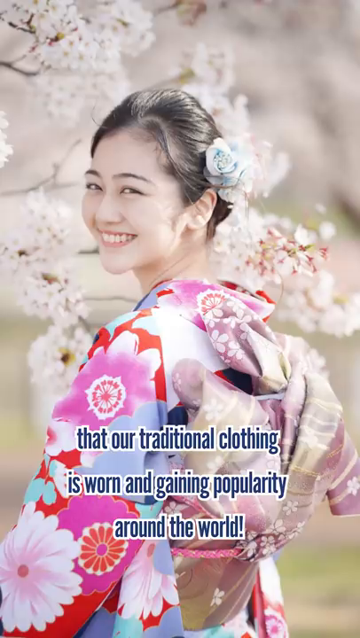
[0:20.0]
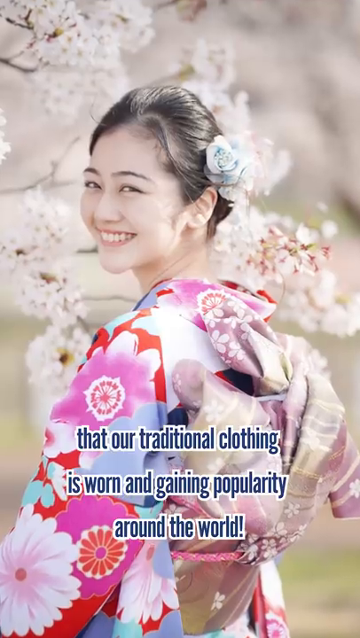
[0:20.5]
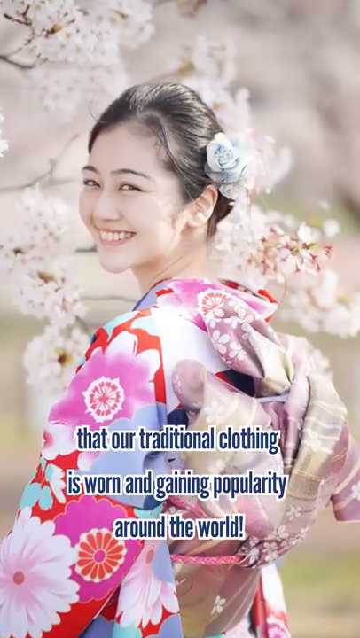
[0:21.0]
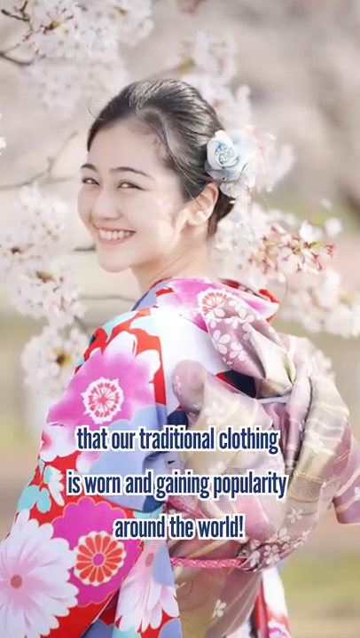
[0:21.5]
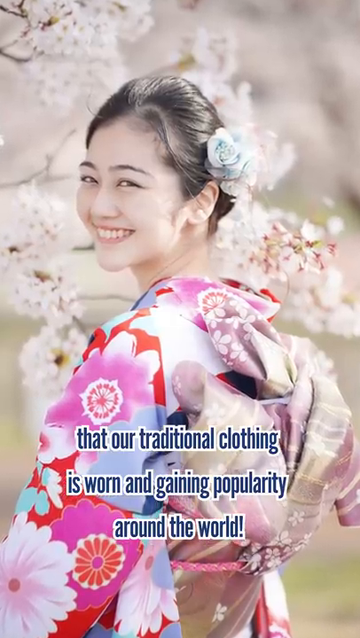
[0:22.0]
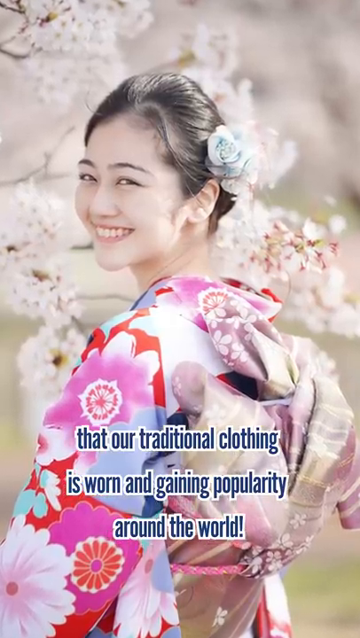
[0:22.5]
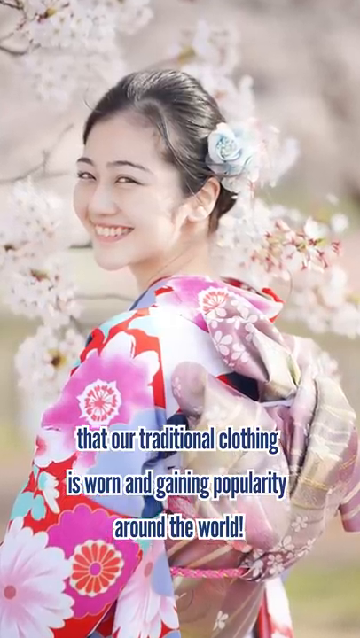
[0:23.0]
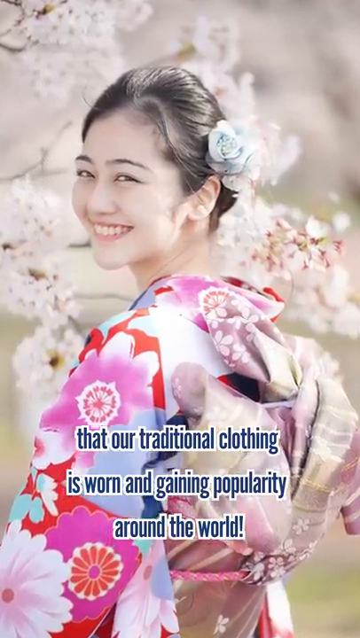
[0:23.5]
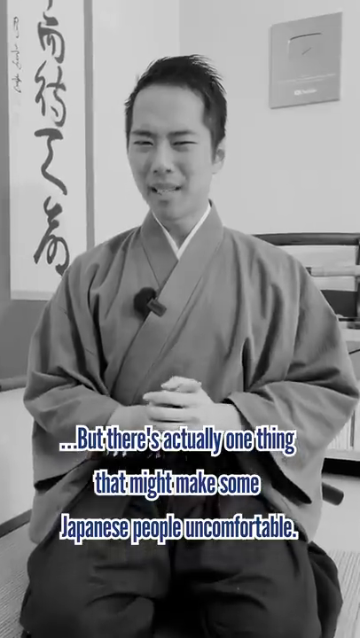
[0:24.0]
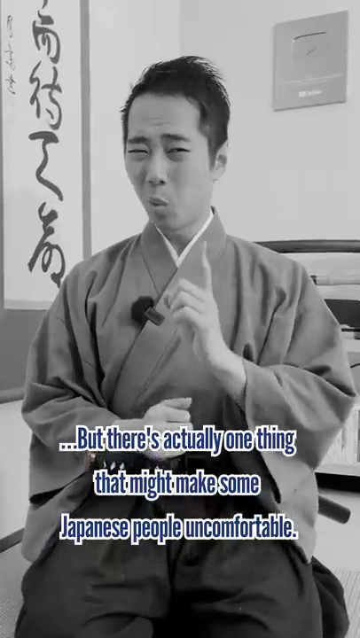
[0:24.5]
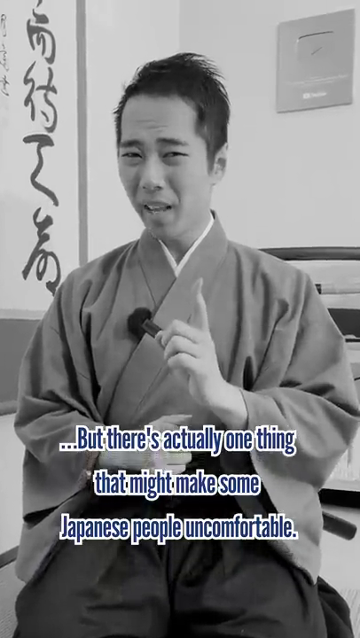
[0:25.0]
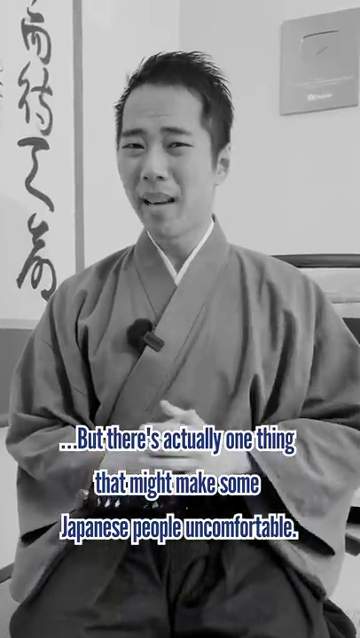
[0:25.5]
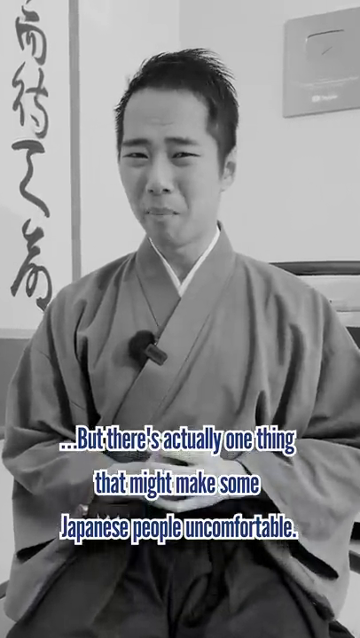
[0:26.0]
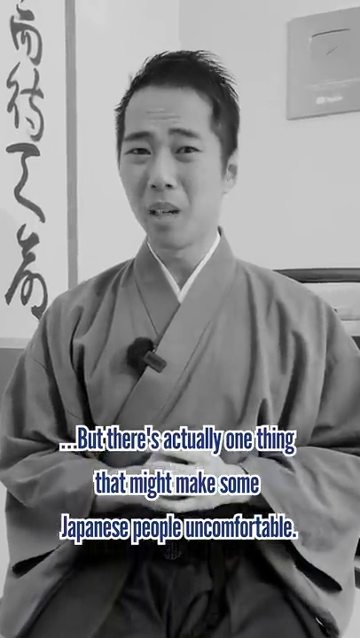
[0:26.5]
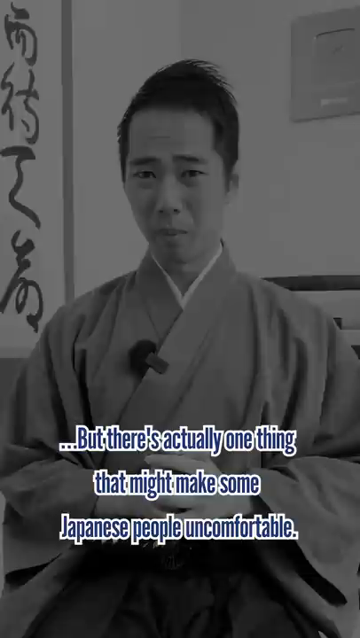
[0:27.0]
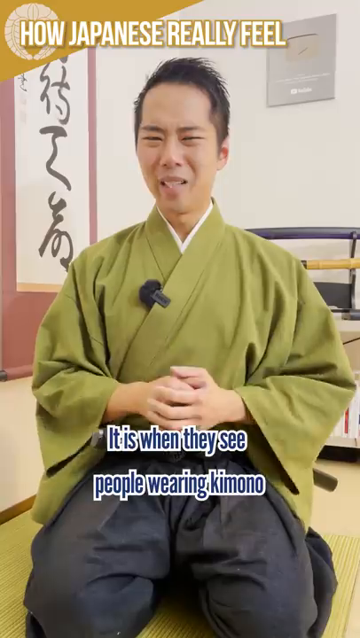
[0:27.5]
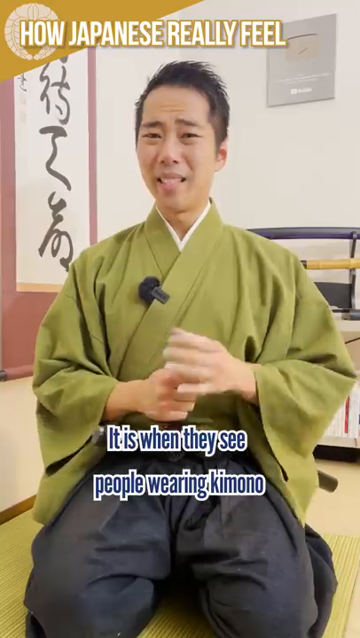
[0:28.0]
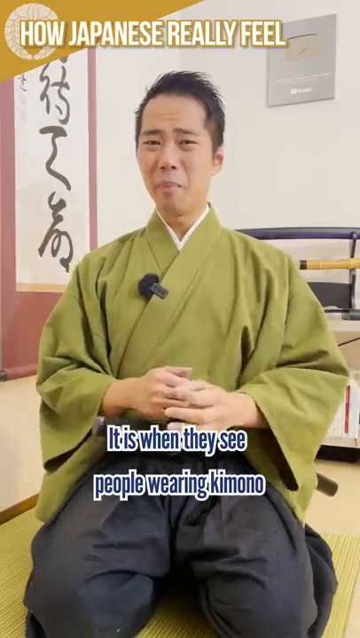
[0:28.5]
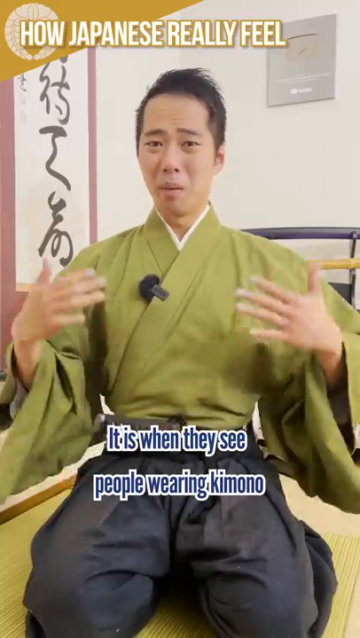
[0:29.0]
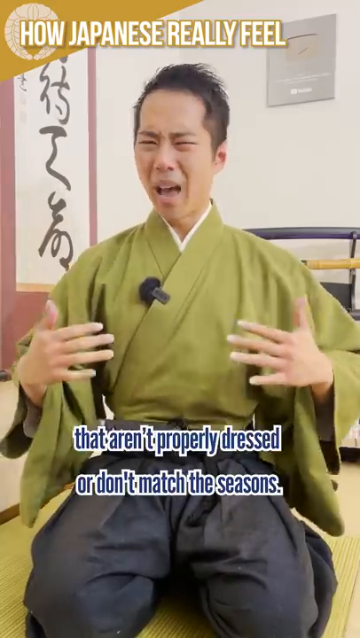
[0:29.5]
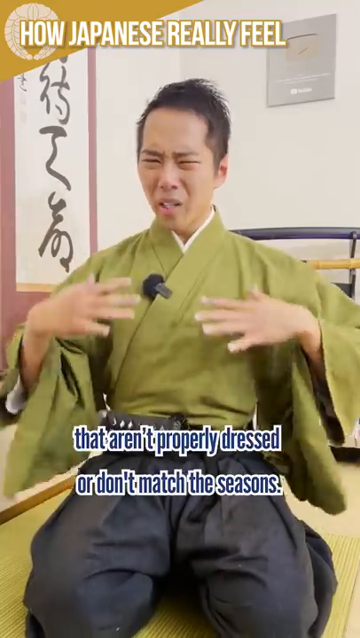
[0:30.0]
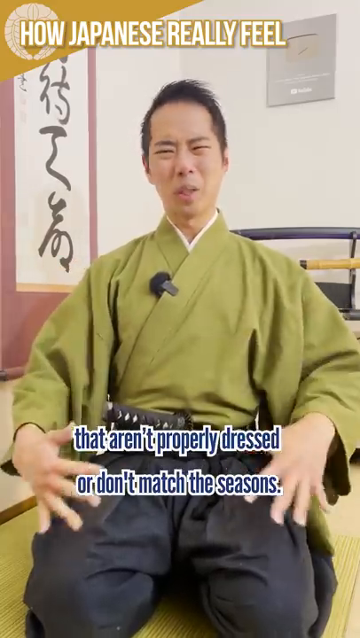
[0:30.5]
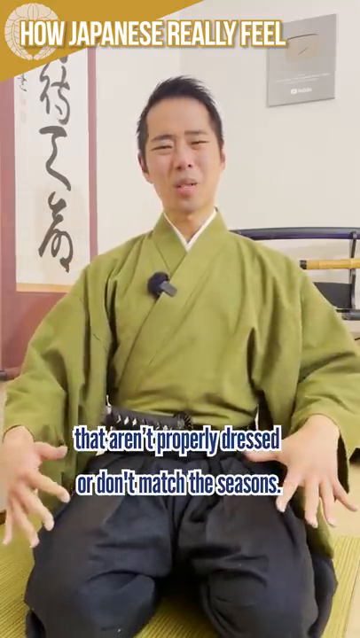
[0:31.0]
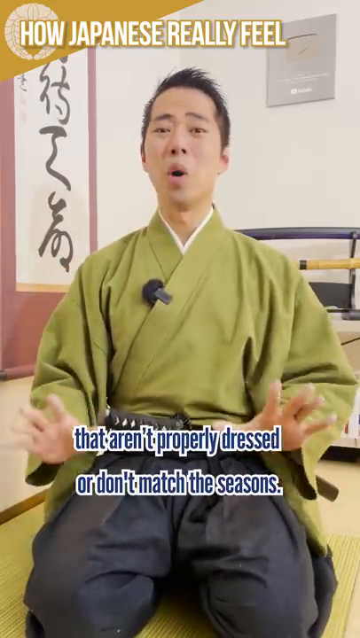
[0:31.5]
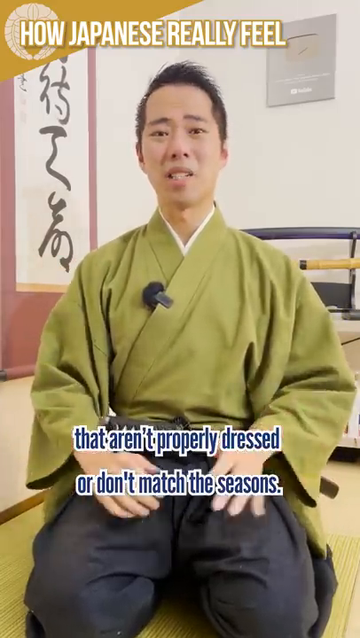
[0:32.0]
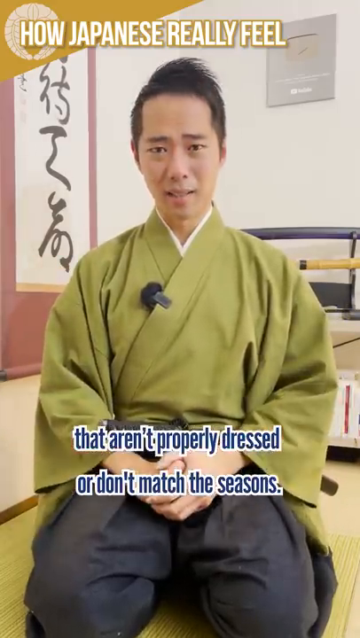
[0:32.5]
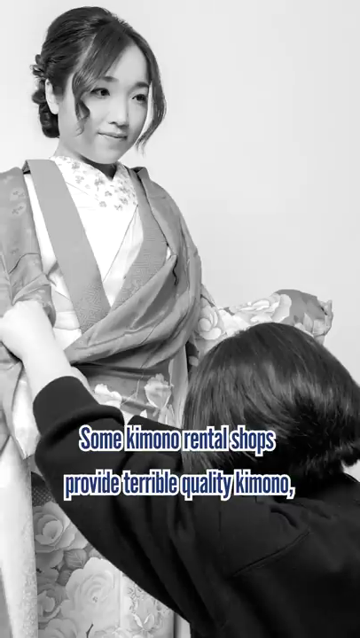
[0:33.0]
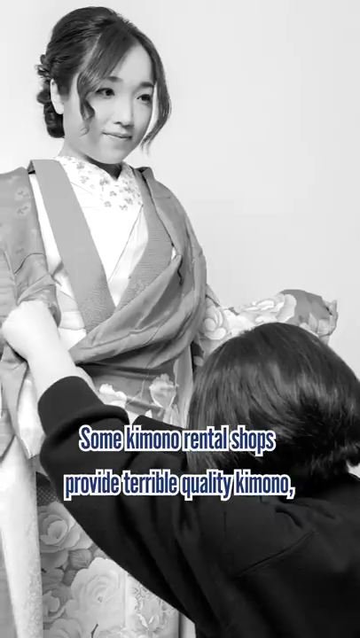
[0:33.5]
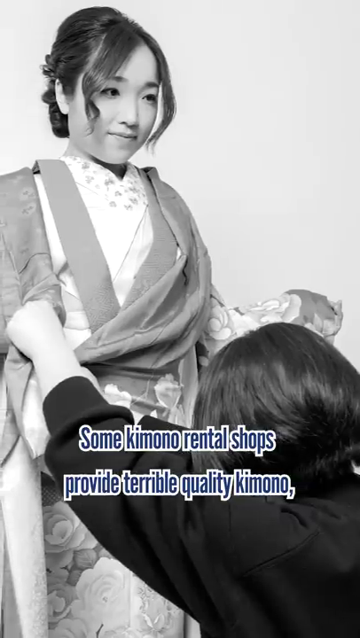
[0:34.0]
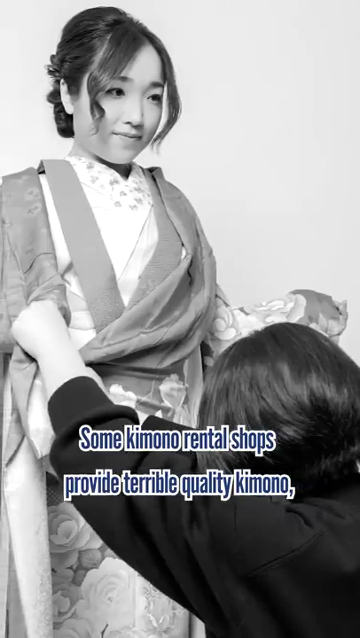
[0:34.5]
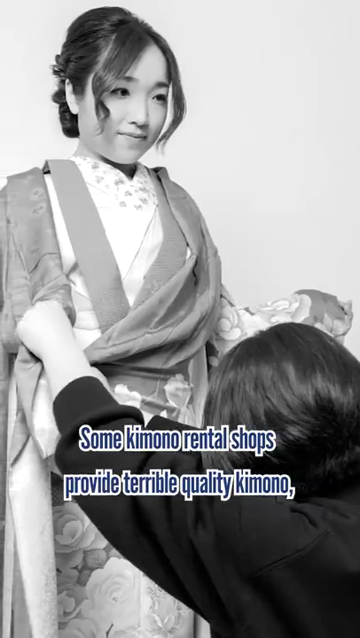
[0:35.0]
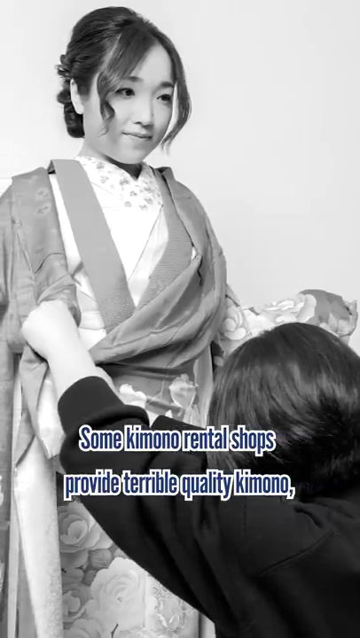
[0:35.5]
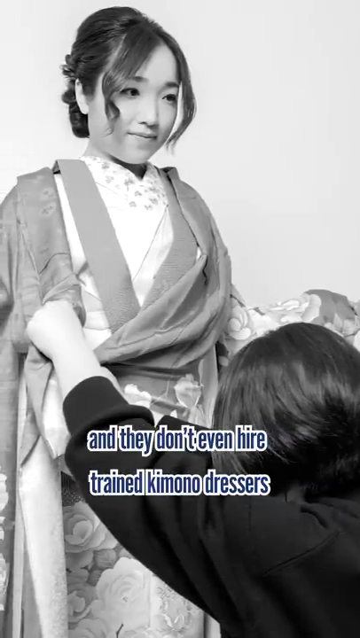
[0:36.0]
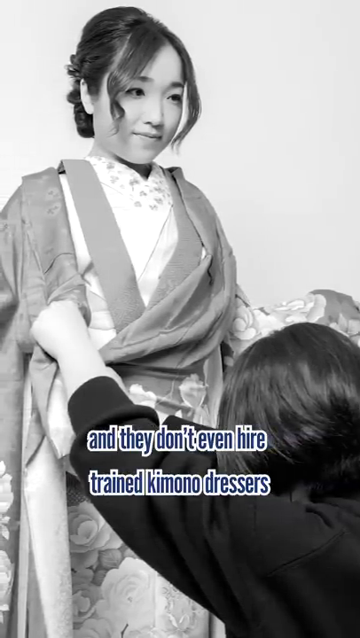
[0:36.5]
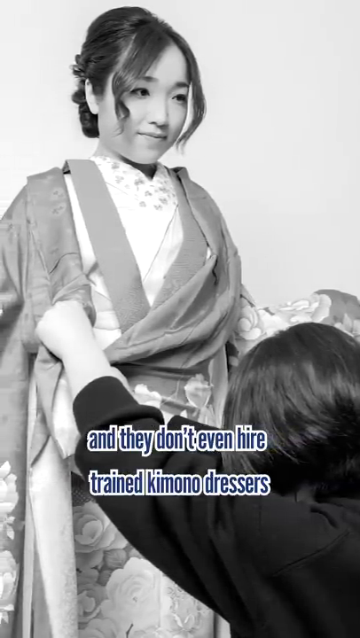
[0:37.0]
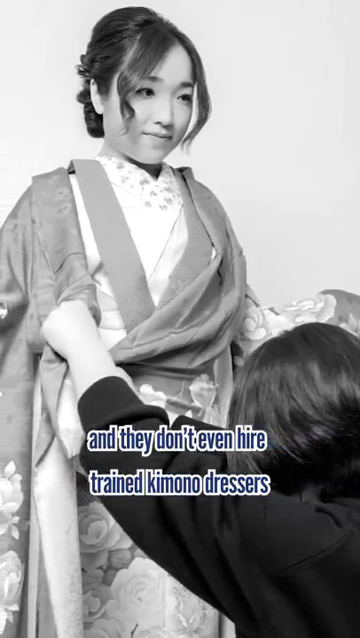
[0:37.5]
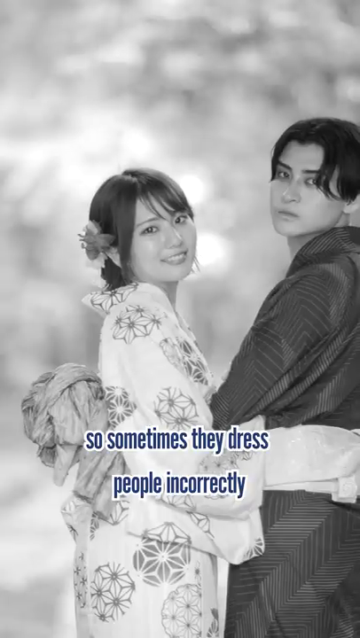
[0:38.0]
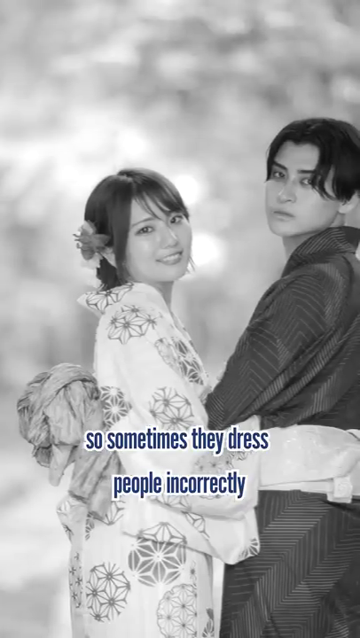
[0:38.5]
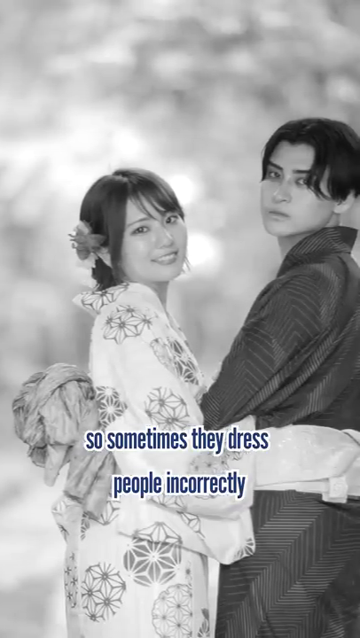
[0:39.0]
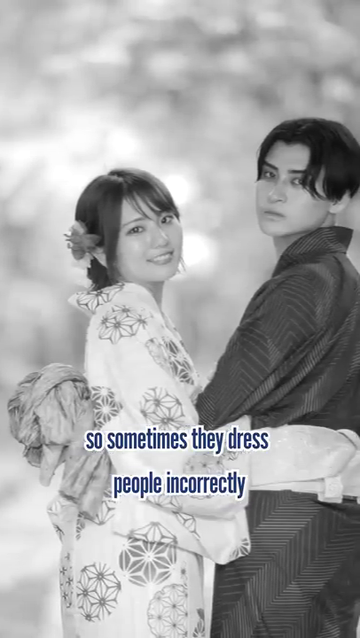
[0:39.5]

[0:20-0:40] An image shows a smiling woman wearing a kimono and looking back. On-screen text states that Japanese people are honored that their traditional clothing is worn and gaining popularity around the world, but that there is actually one thing that might make some Japanese people uncomfortable. A man wearing sort of traditional Japanese clothing appears, kind of explaining the concept, and the text reads "it's when they see people wearing kimono that aren't properly dressed or don't match the seasons." Then the text reads "some kimono rental shops provide terrible quality kimono, and they don't even hire trained kimono dressers, so sometimes they dress people incorrectly."